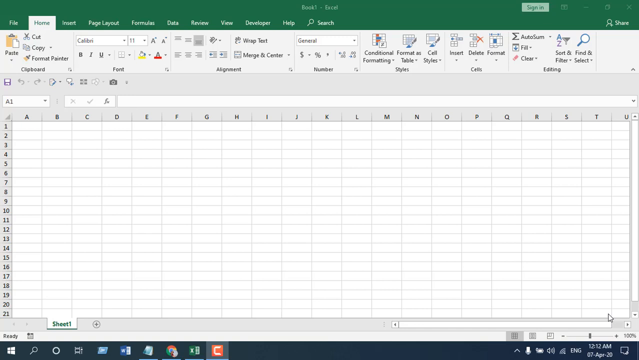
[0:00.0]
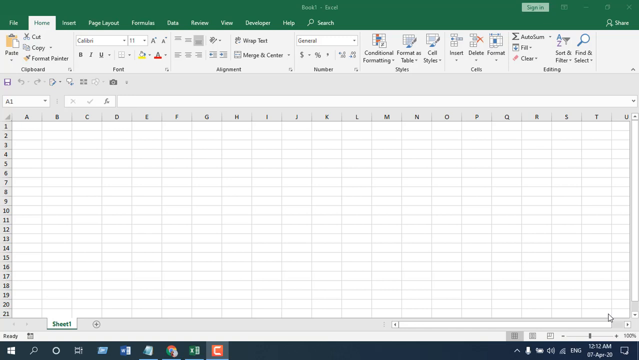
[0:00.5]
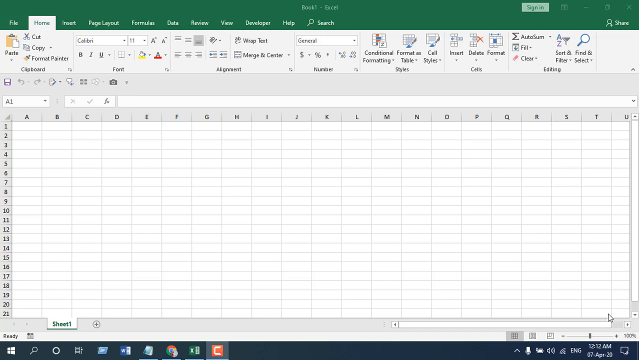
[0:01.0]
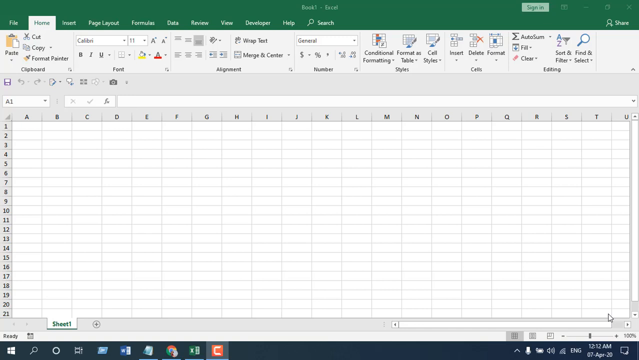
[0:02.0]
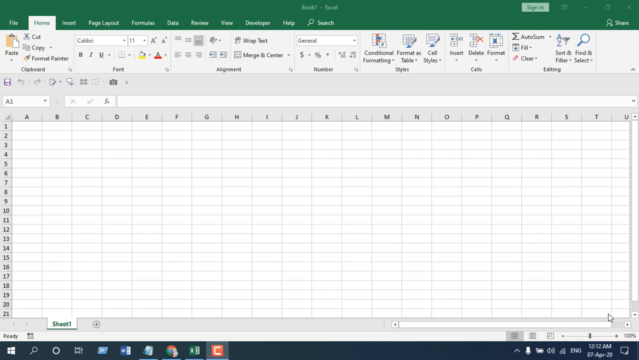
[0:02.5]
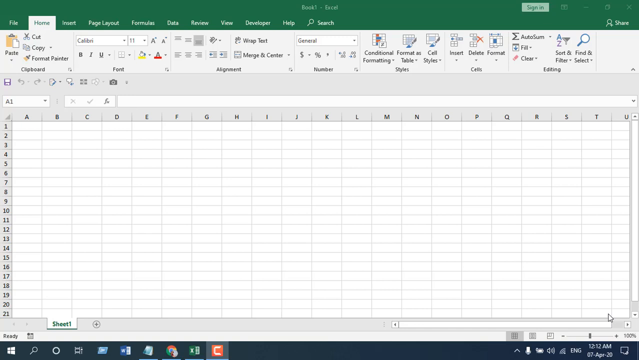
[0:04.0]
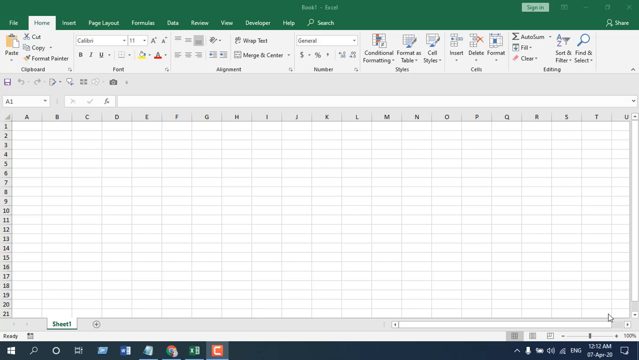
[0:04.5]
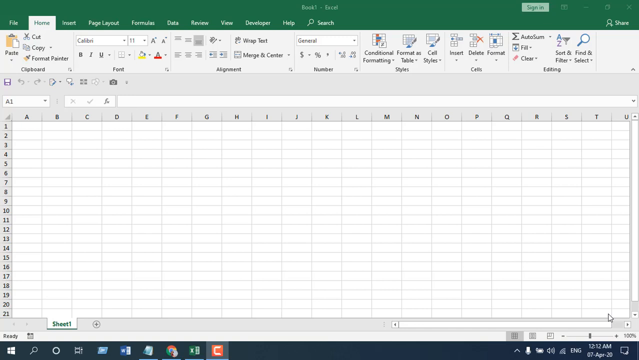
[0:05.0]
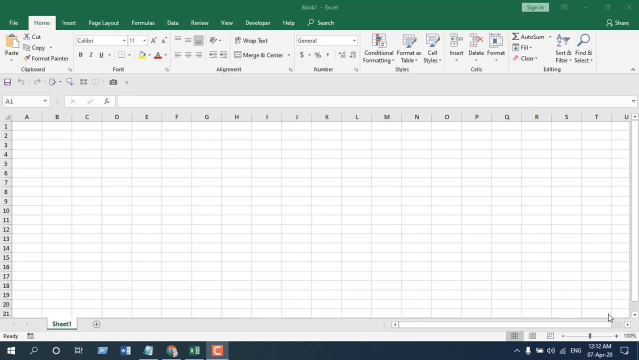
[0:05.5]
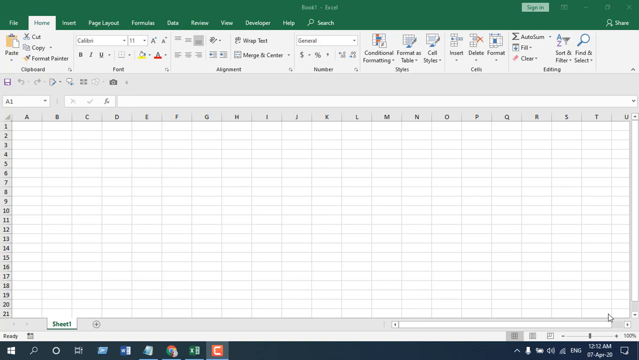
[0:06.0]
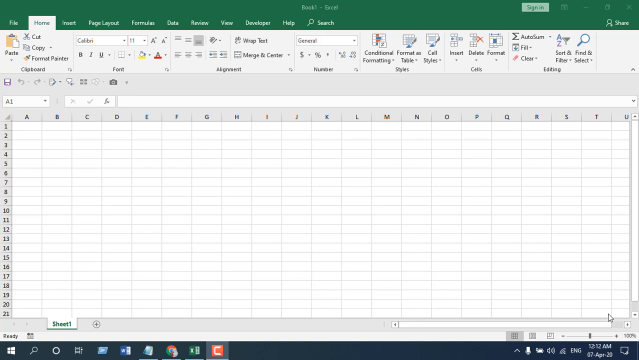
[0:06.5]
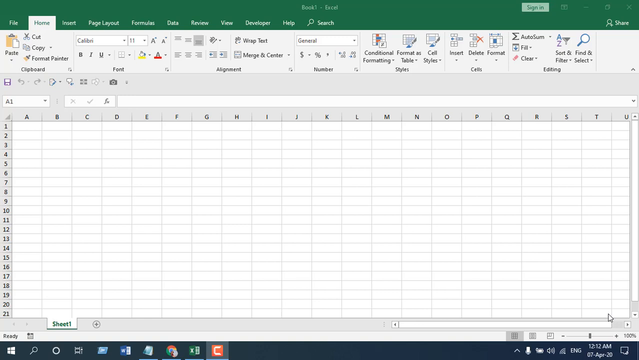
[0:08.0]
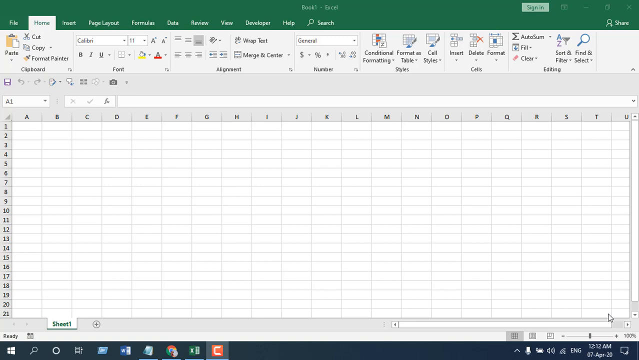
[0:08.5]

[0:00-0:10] A computer screen is shown. Across the very top is a green strip; starting in the top left corner is the word "File," followed to the right by "Home," "Insert," "Page Layout," "Formula," "Data," "Review," "View," "Developer" and "Help," written in white, then a small magnifying glass and the word "Search." In the top right-hand corner, in white, is the word "SHARE." Beneath the green strip are many different controls for changing font, sizes and colors. Below those are columns running from A to U across the screen and rows numbered 1 to 21 going down. Above the A through U columns is a white rectangle with "A1" in it, beside it another white rectangle containing an X, a check mark and the letter A, and beside that a large, long white triangle with nothing in it.